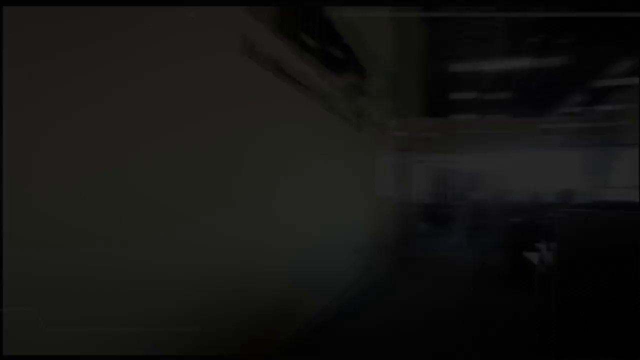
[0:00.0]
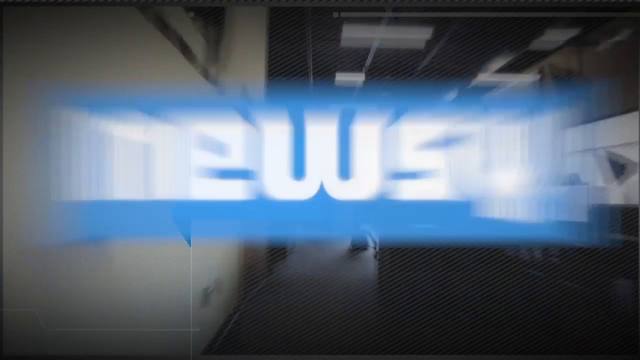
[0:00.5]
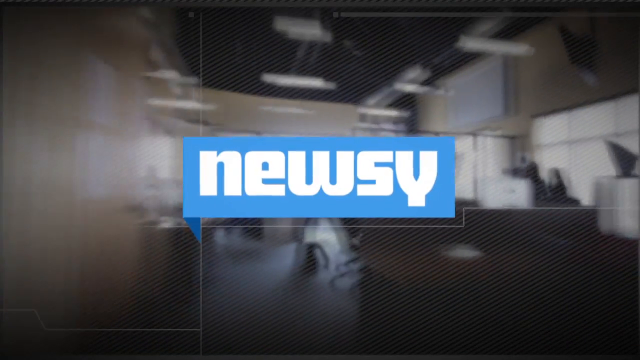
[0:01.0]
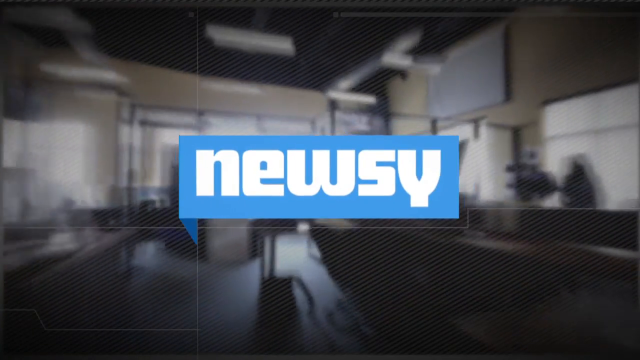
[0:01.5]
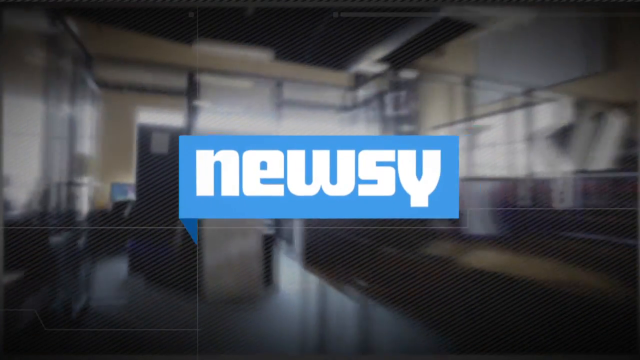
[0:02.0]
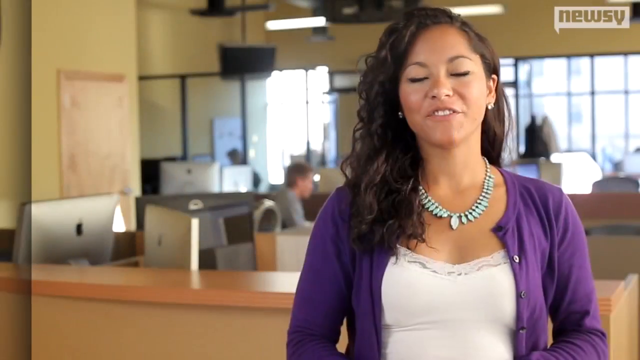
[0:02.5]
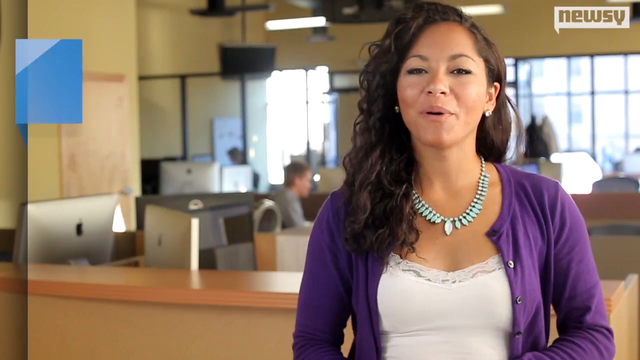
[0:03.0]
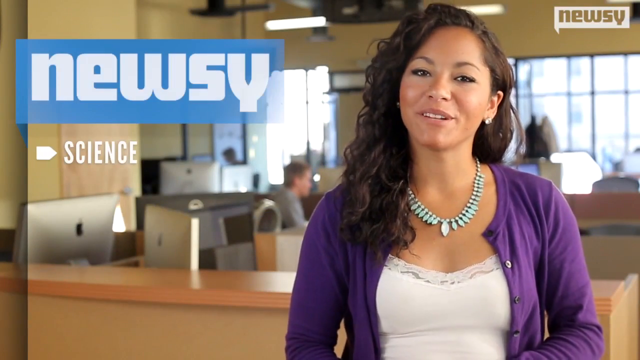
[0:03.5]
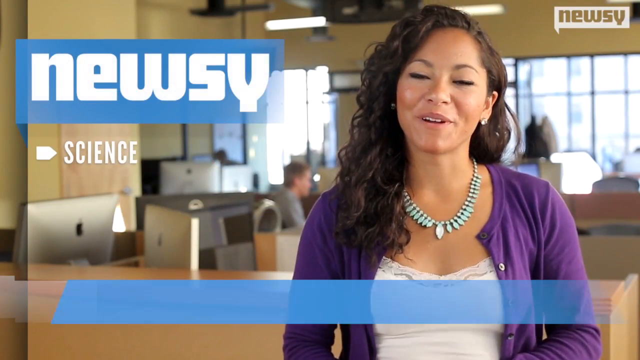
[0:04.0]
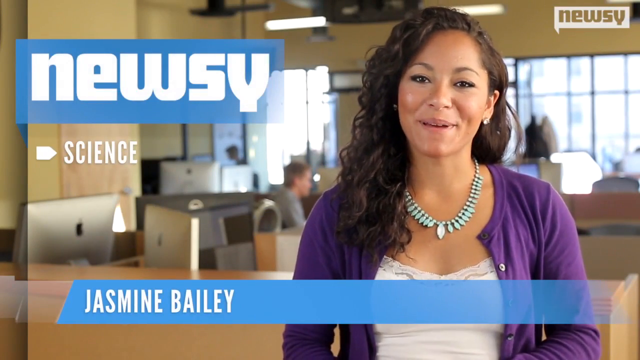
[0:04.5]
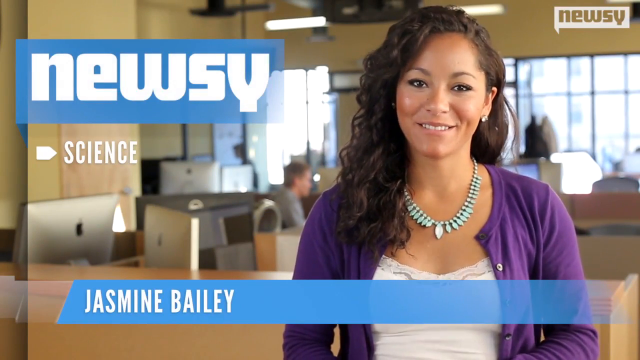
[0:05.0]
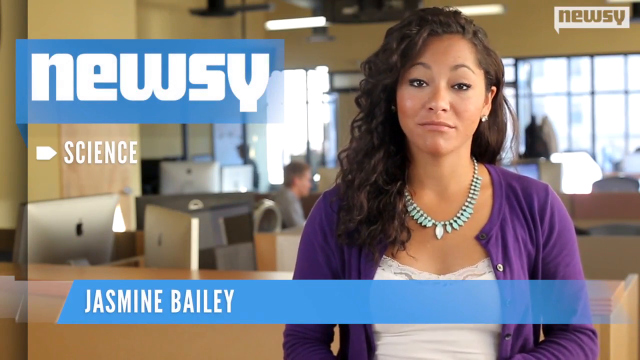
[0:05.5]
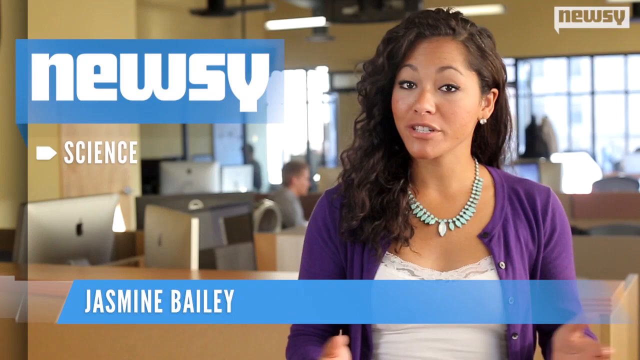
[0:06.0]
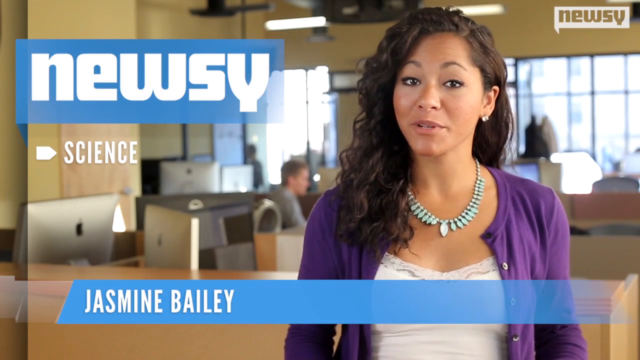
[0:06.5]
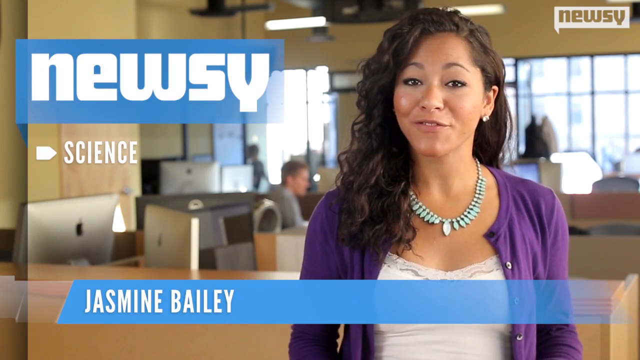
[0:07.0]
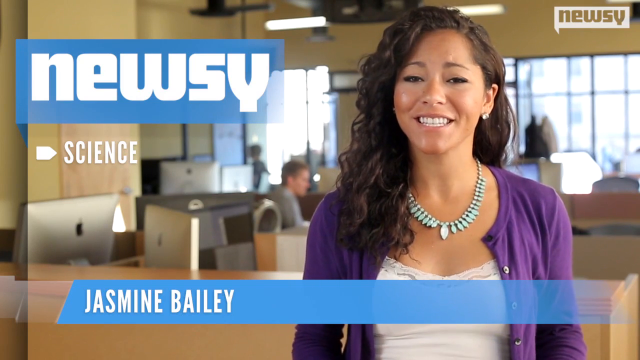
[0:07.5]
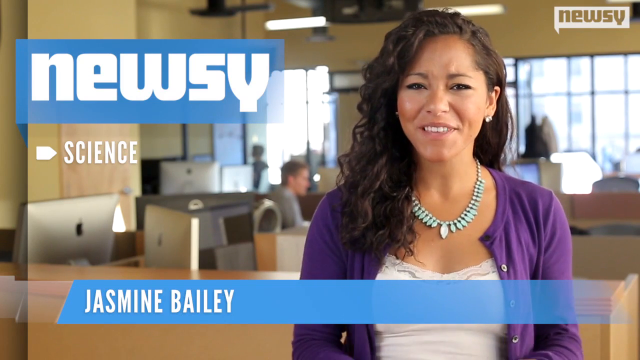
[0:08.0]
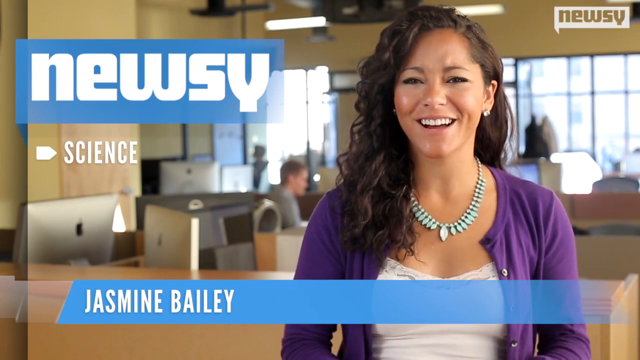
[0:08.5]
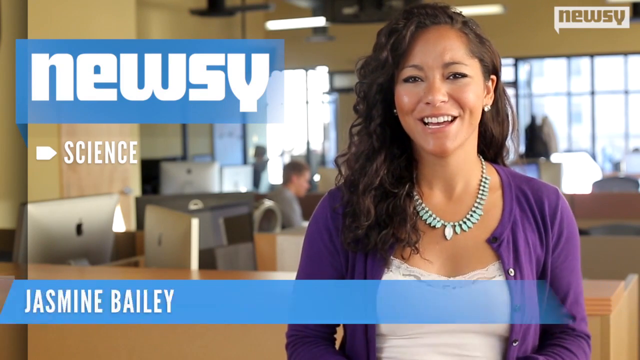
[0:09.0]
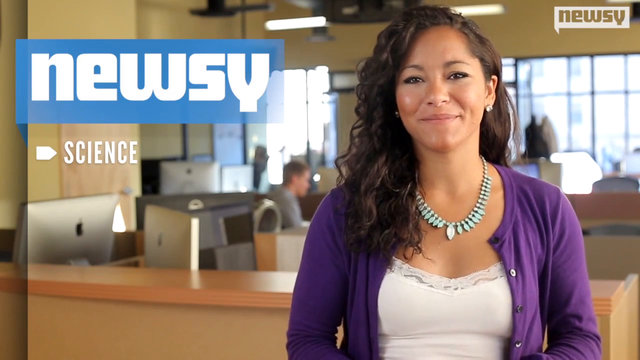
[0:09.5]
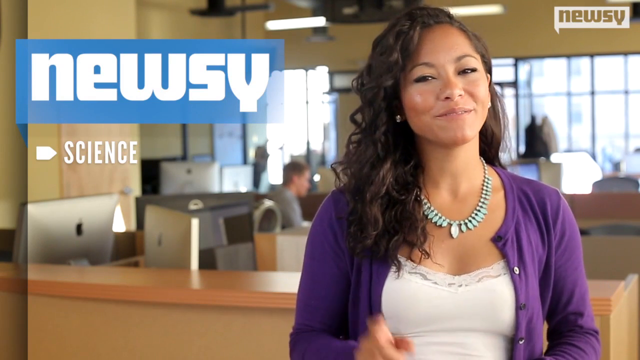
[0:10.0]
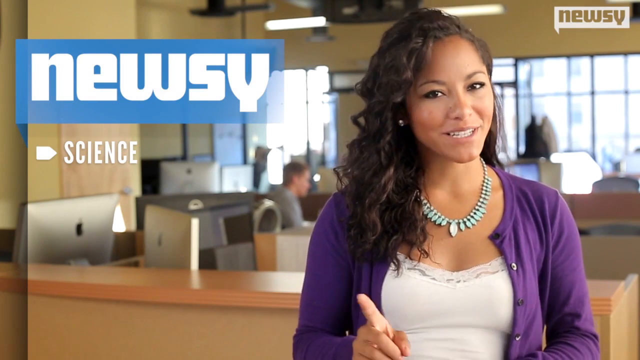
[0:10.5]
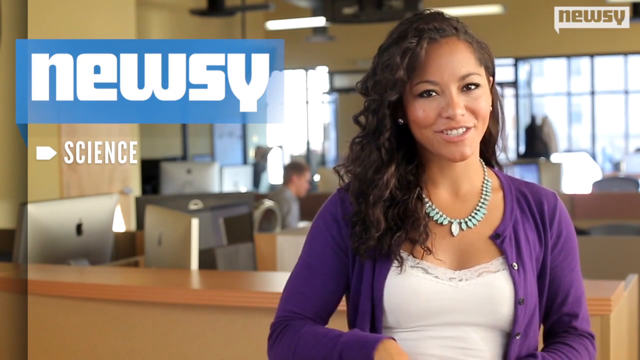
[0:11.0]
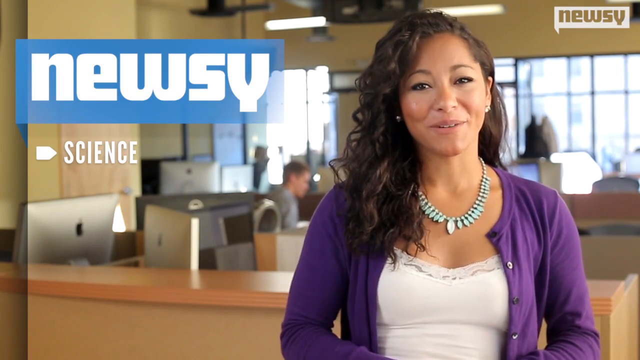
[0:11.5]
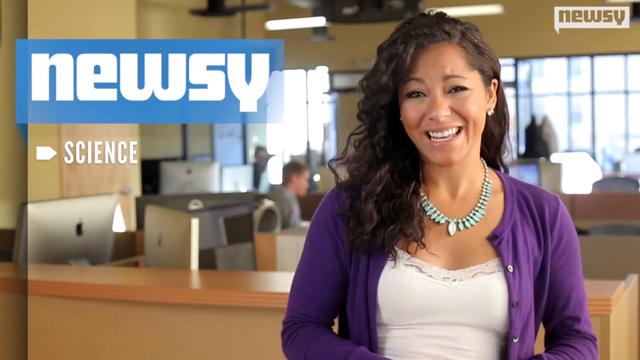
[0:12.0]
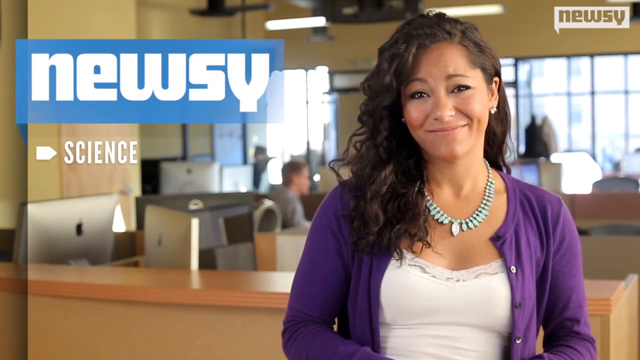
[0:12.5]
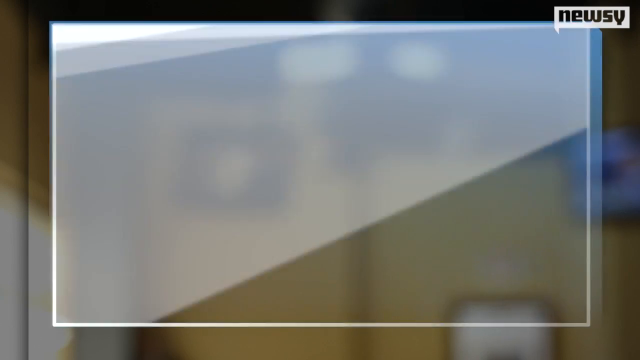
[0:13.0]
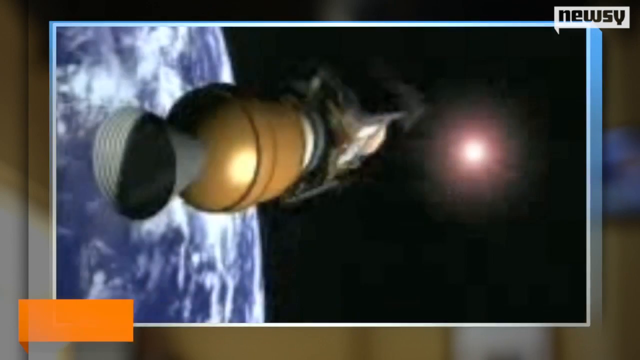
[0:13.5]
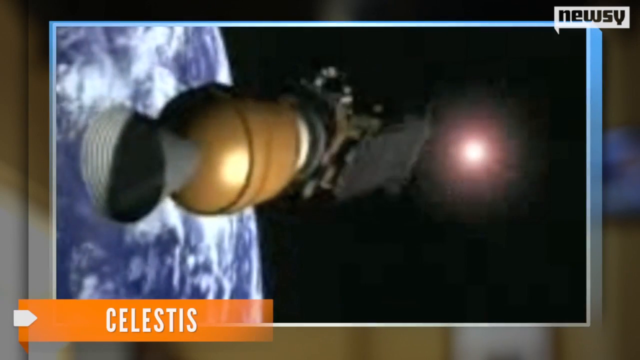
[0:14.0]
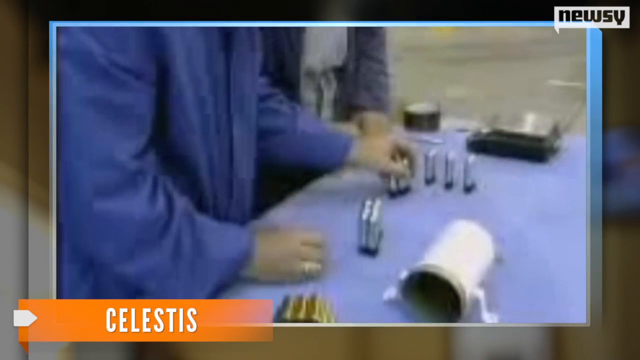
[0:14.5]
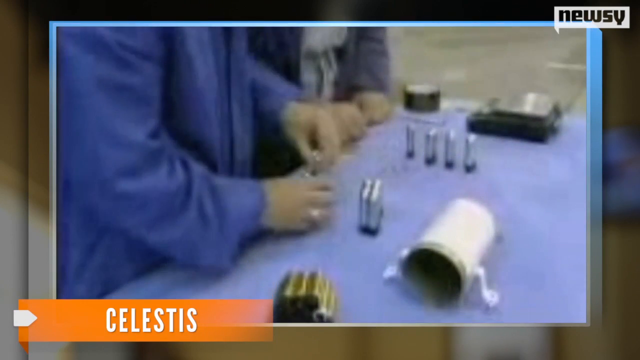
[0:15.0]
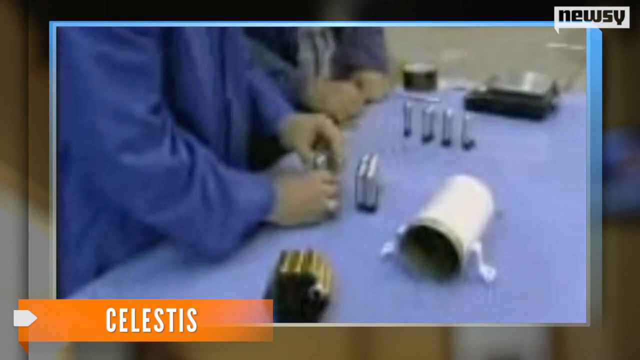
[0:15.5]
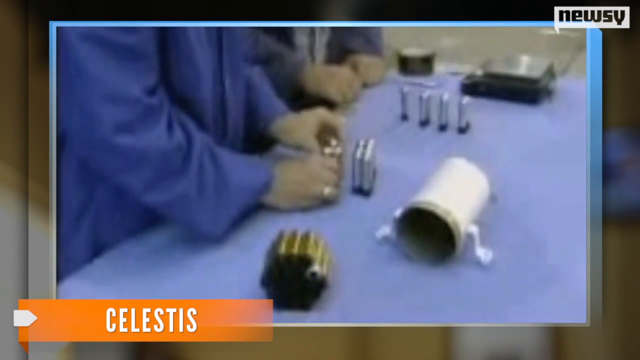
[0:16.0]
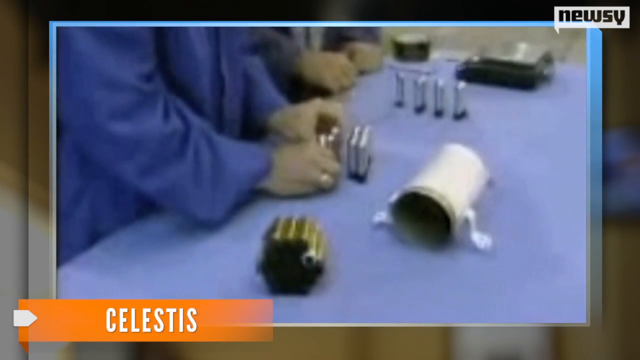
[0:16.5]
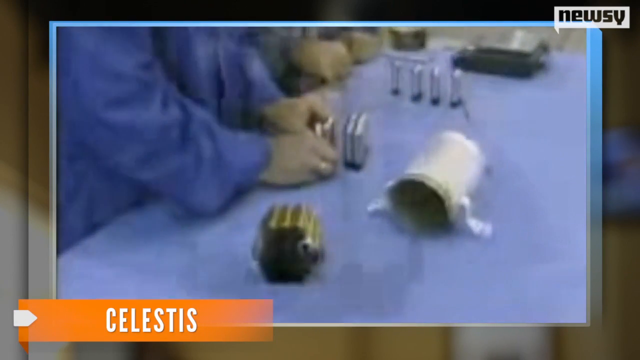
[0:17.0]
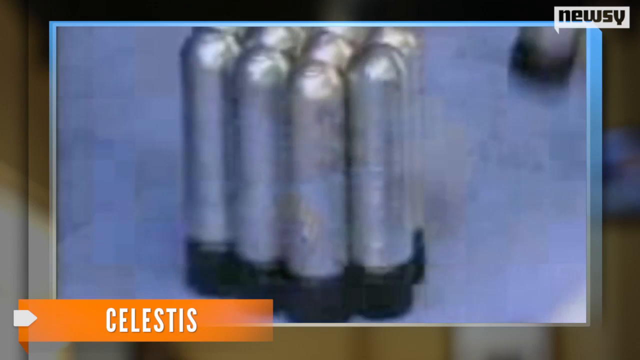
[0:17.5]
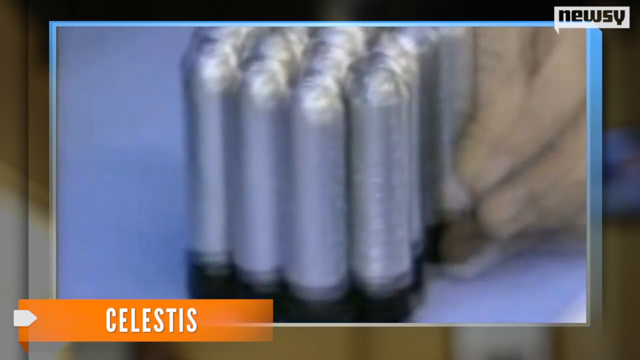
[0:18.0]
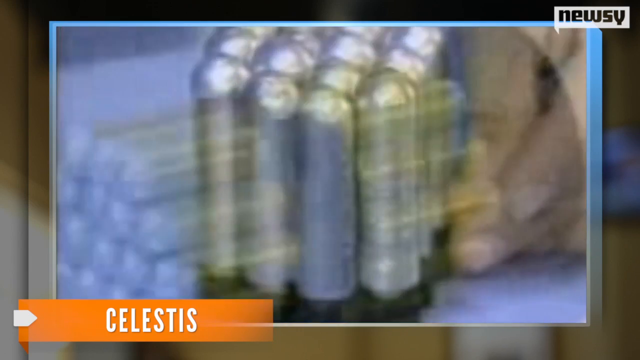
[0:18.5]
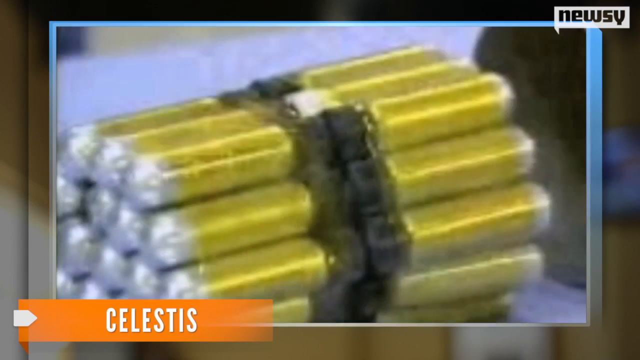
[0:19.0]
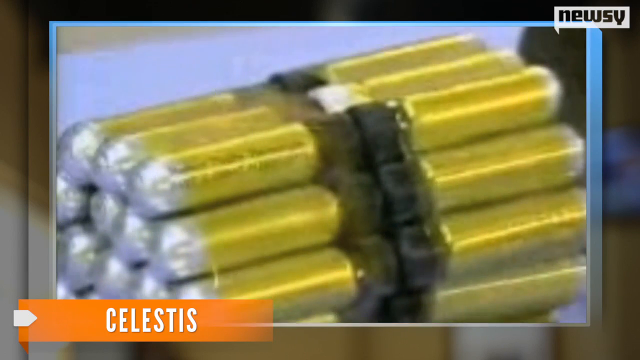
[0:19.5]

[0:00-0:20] A female news anchor presents on a science news channel called Newsy; the presenter is Jasmine Bailey. She presents about Celestis, which seems to be some sort of bullet-shaped mechanism, apparently meant to be used in space. The object is silver and has been wrapped by the scientists with gold wire. The anchor seems very enthusiastic, and the studio behind her seems empty. She wears a purple jersey, a greenish necklace and earrings. Behind her are tables, empty spaces, a lot of woodwork and some lights; she seems to be recording the news in a laboratory. The objects look like they will be used to build some sort of satellite.